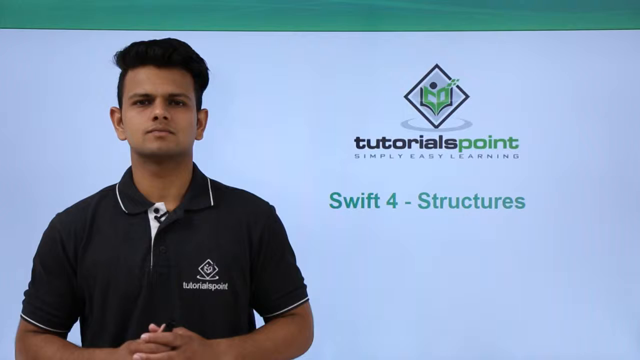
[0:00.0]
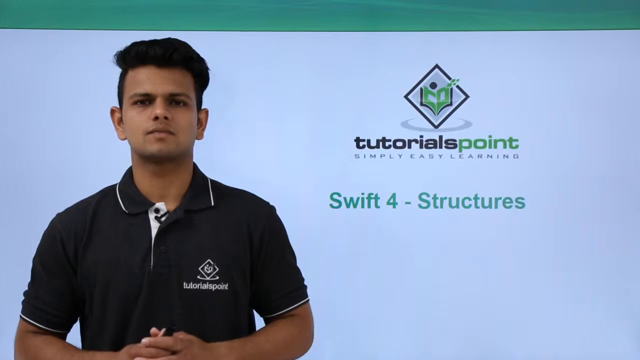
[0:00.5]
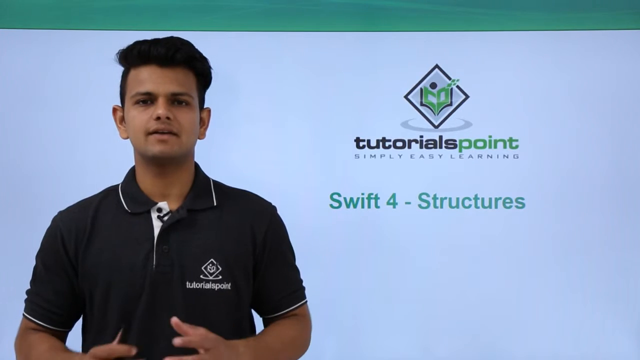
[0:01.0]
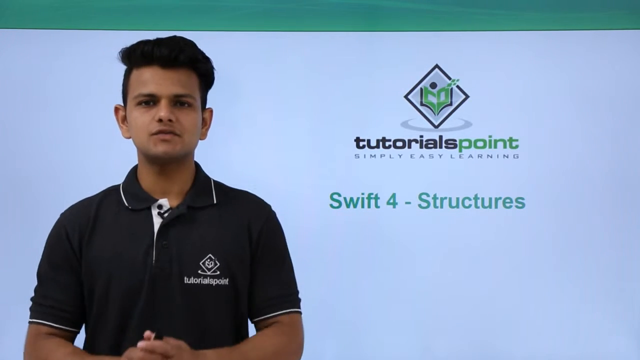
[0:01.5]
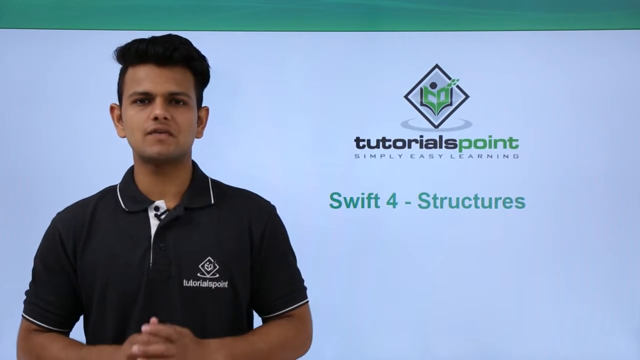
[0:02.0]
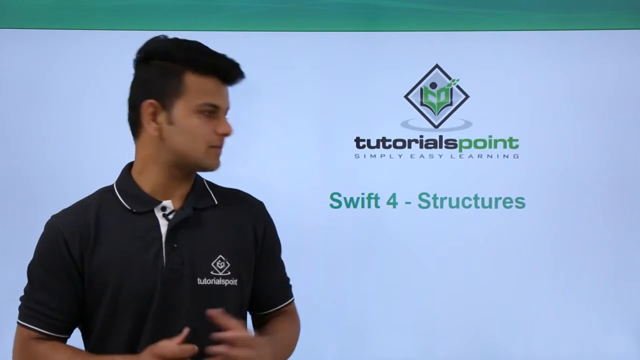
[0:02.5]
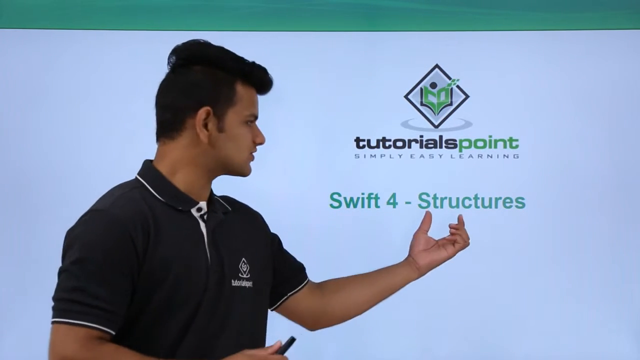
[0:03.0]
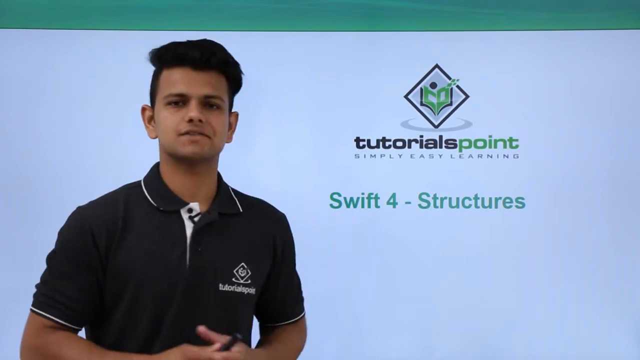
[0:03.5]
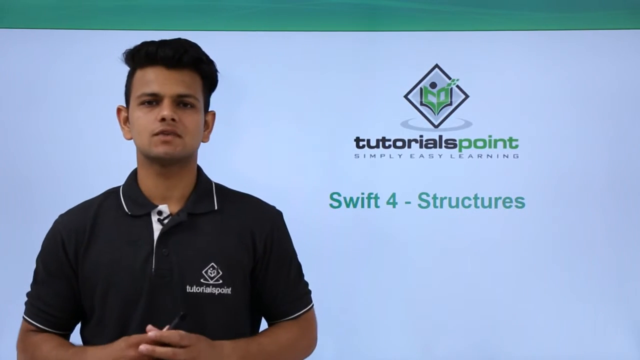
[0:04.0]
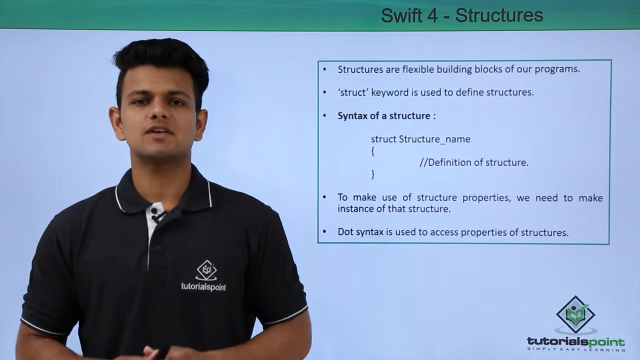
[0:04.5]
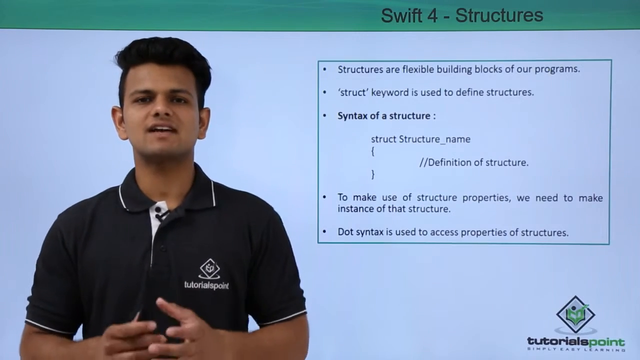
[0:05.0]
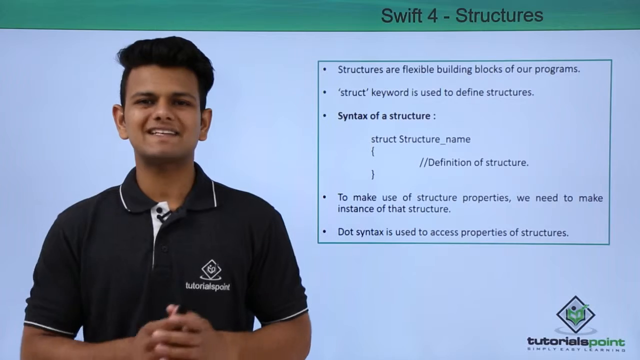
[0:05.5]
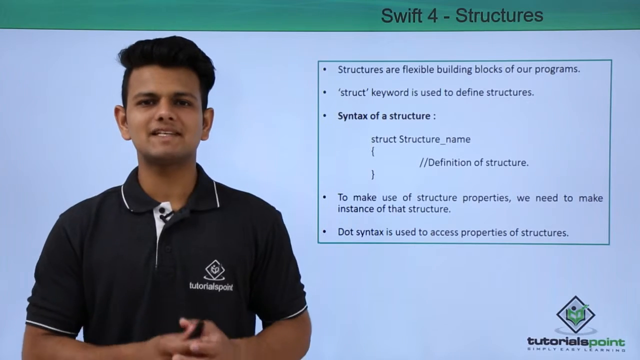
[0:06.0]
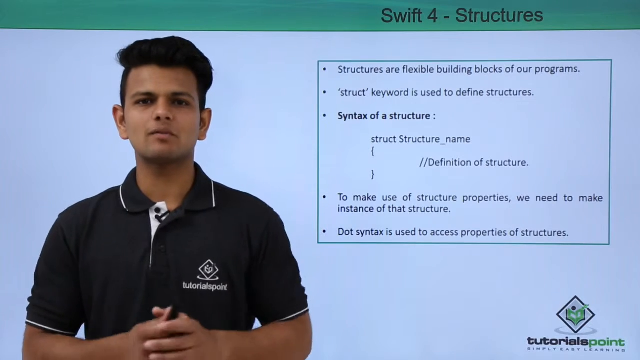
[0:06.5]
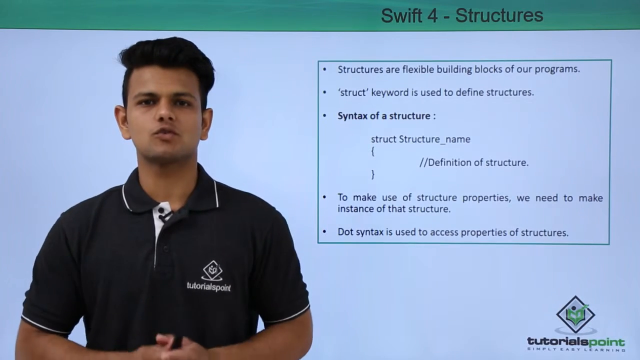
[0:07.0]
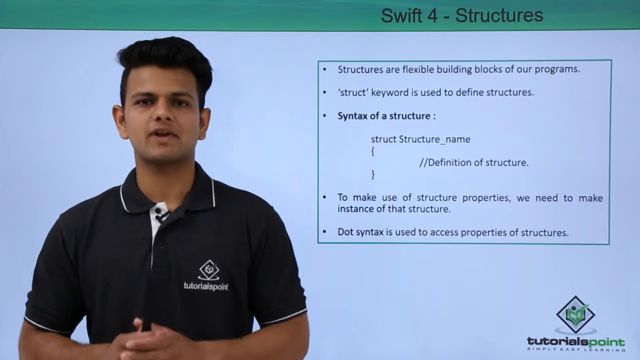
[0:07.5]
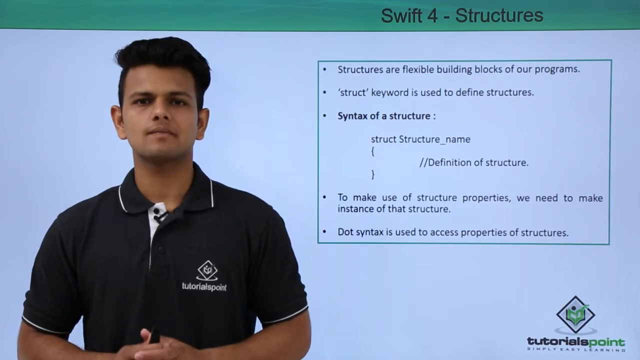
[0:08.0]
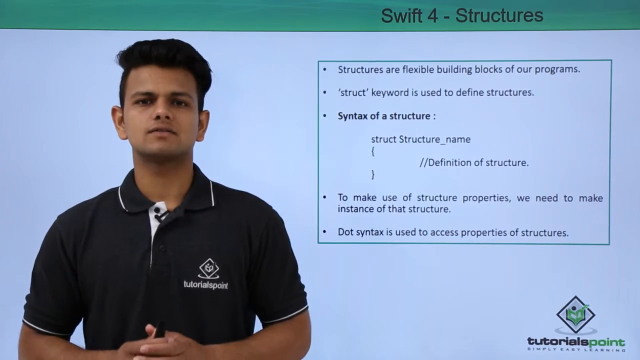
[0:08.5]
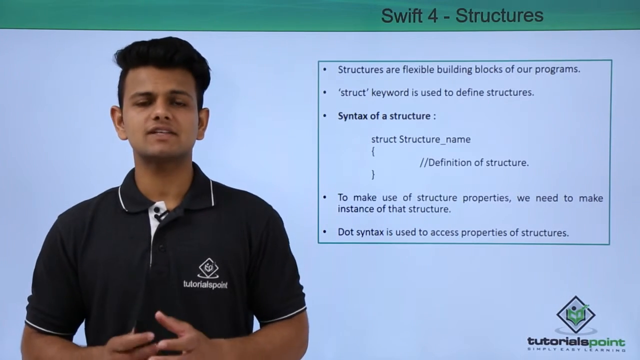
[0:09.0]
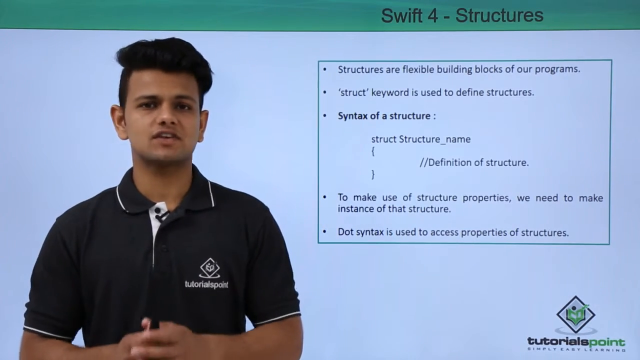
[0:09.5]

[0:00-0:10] A brown-skinned man with a low cut, wearing a mainly black t-shirt with some white outlines, stands in front of a bluish-grey background, with some text and a graphic appearing to his left. The video seems to be produced by Tutorials Point, and its title is likely "Swift 4 - Structures". The man turns to his side, points his left hand at the text on the screen, and returns to his earlier posture as a group of text, including what looks like code, appears in a transparent rectangle with a green outline. The text in the rectangle appears as a bulleted list.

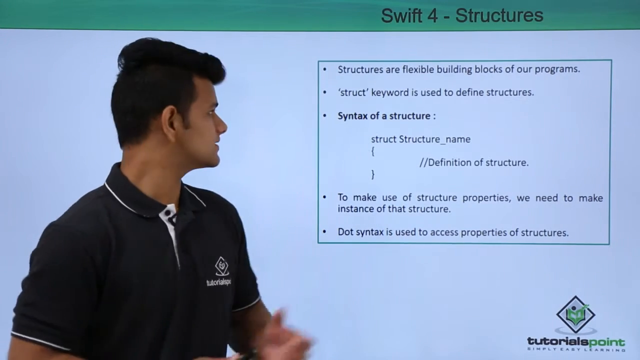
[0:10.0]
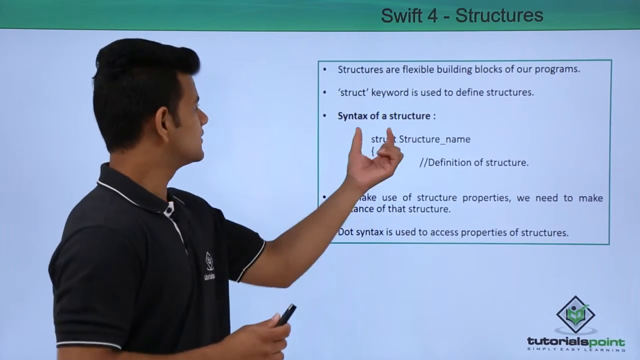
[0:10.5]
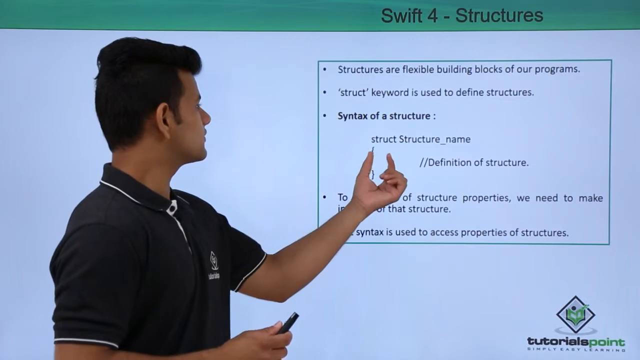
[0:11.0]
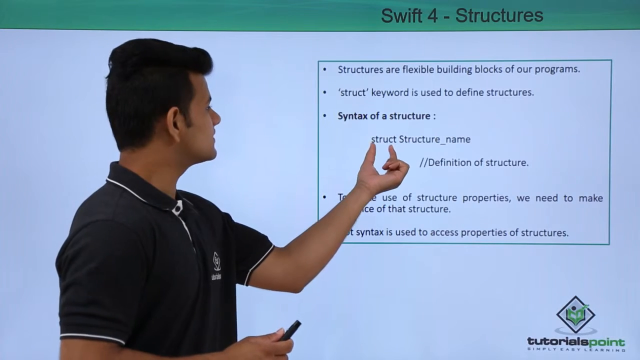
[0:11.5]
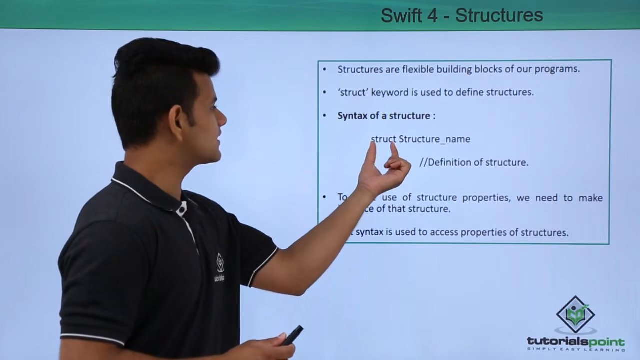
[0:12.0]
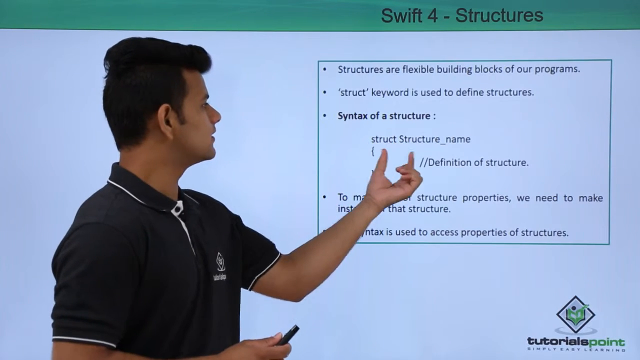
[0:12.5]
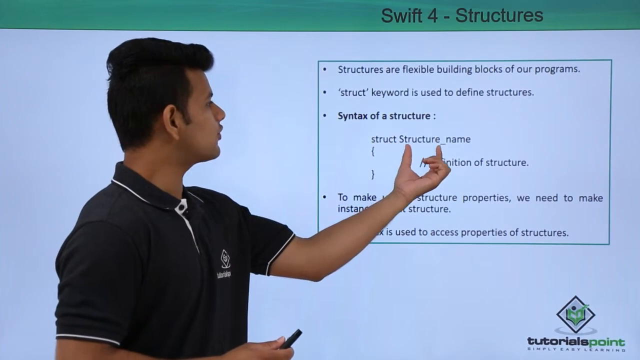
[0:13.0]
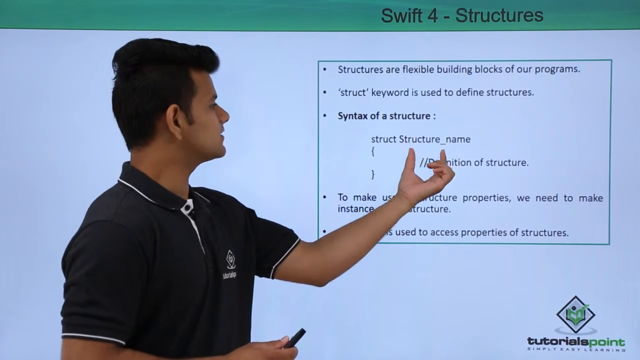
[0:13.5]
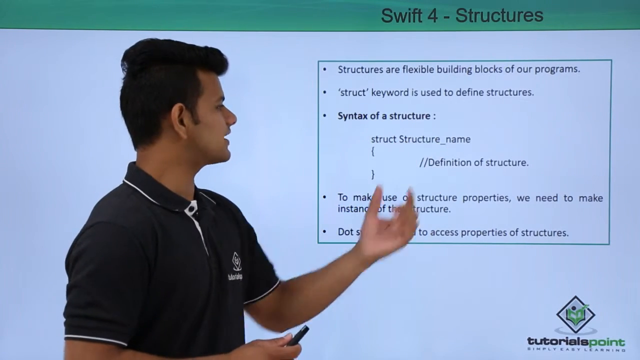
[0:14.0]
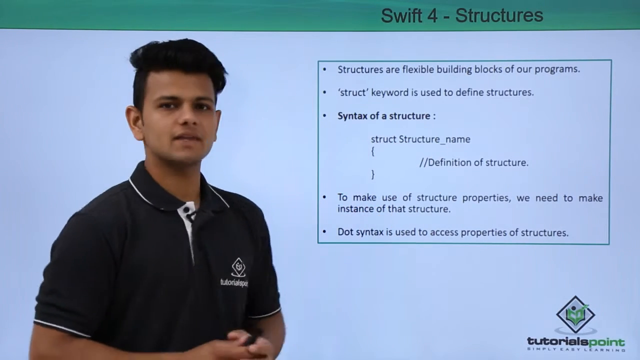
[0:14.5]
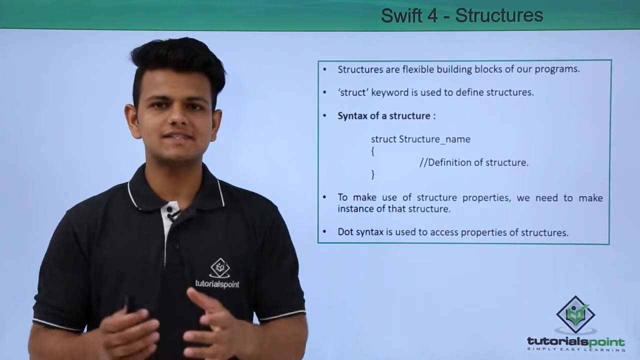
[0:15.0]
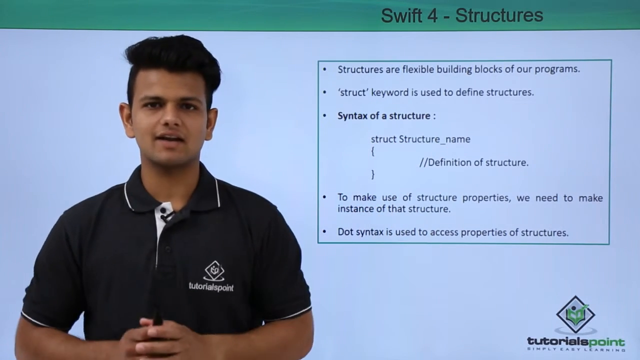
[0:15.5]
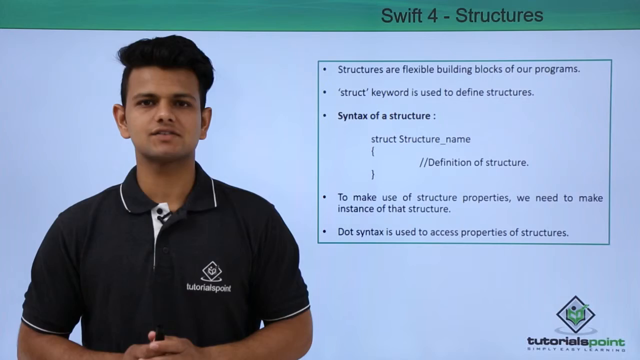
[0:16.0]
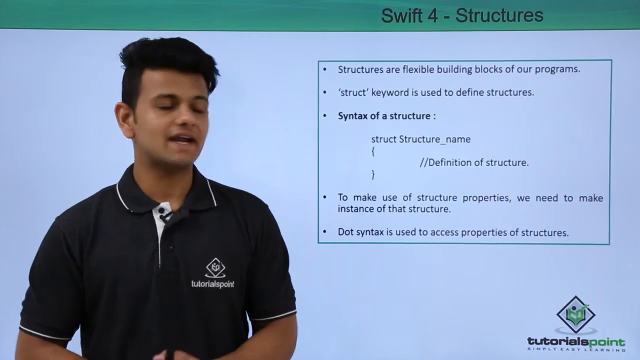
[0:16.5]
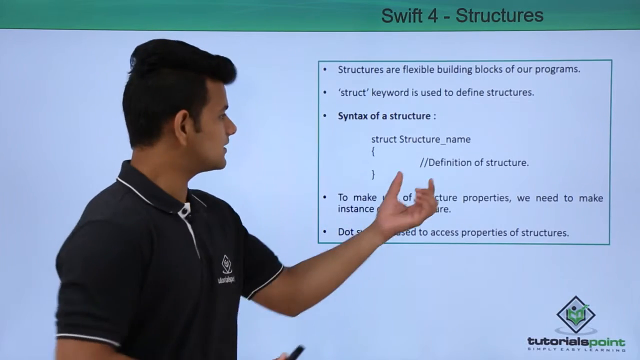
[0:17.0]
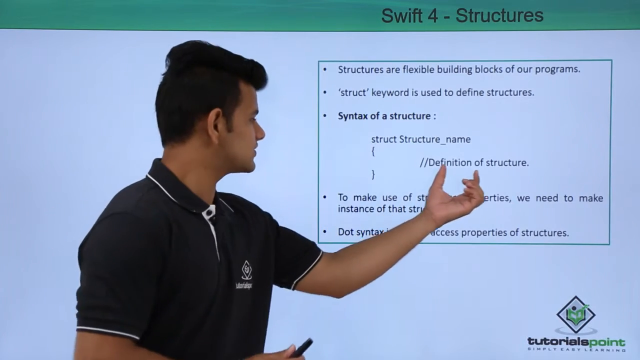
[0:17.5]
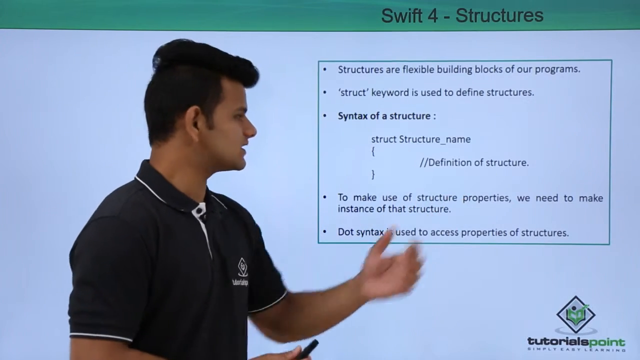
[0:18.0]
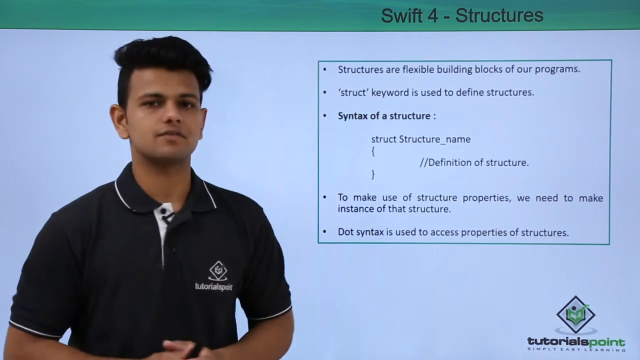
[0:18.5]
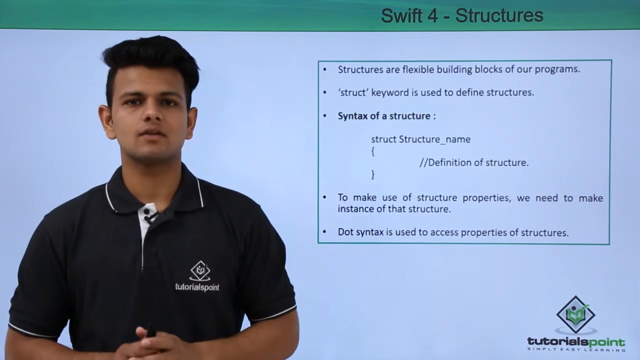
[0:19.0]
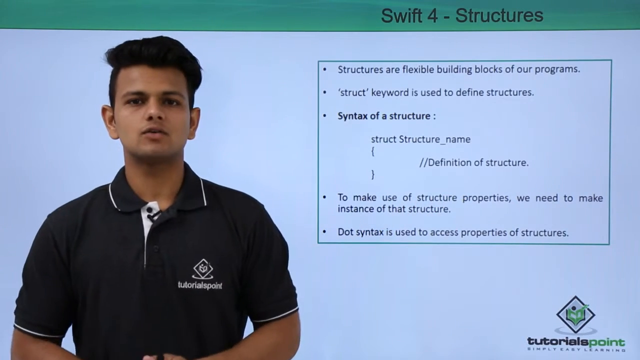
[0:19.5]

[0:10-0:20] The brown-skinned man with a low cut, in a mainly black t-shirt with white outlines, turns sideways and points his left thumb and index finger at text on the screen behind him. The text is a bulleted list in a transparent rectangle with a green outline; the third item, "Syntax of structure", looks like code. Across the top section of the screen is the text "Swift 4 - Structures", written in black on a green background, and a 'Tutorials Point' logo is at the bottom right. The man continues to talk to the camera and occasionally turns to his left, seemingly to talk about the text behind him. He is also holding what looks like a black marker in his right hand.